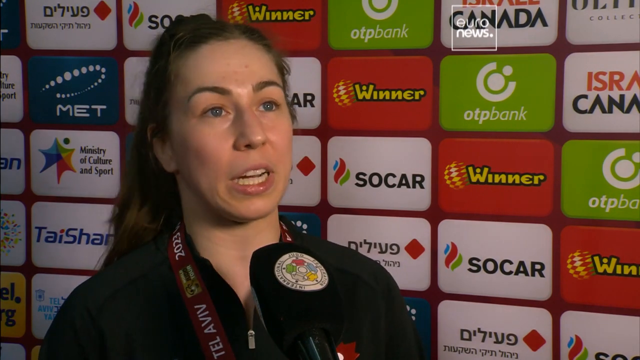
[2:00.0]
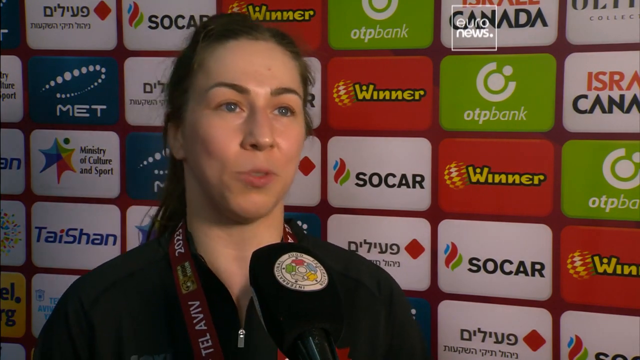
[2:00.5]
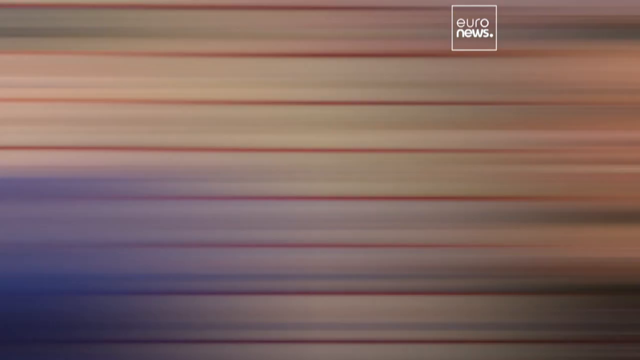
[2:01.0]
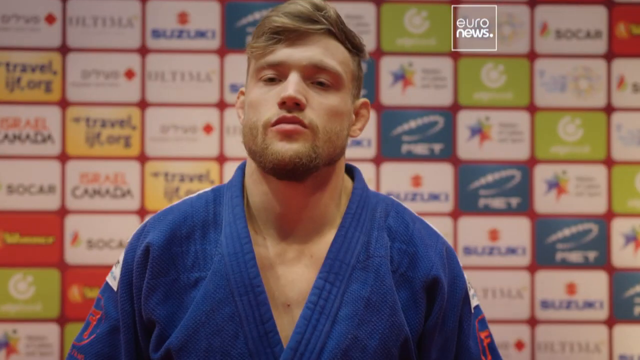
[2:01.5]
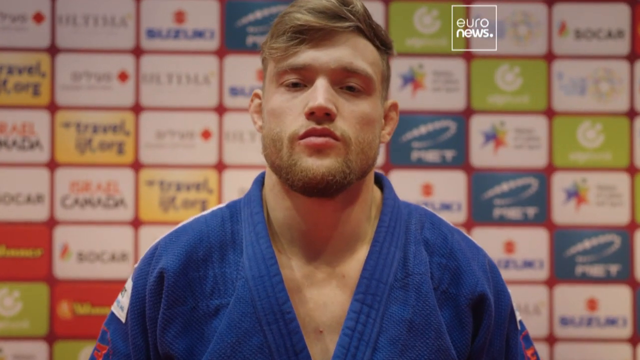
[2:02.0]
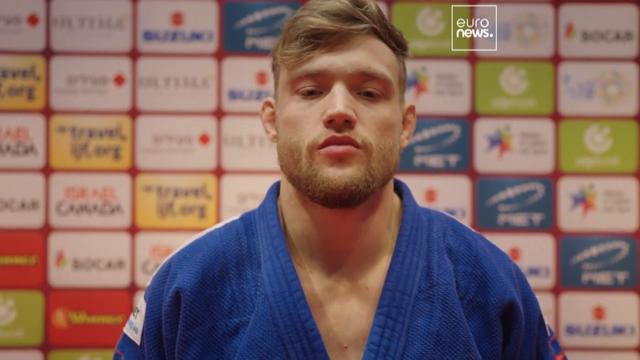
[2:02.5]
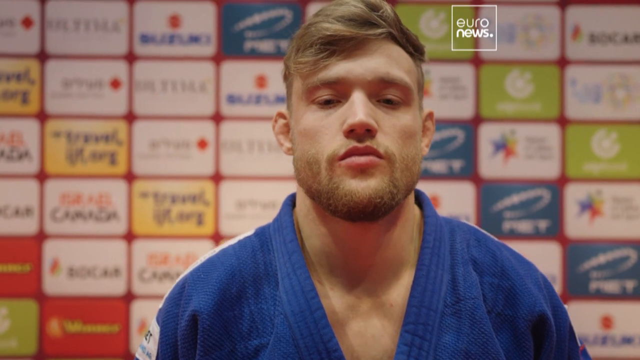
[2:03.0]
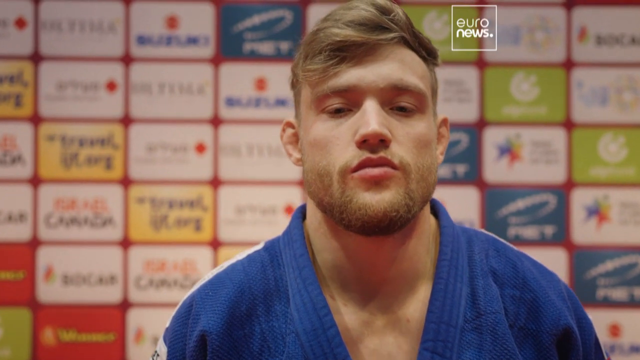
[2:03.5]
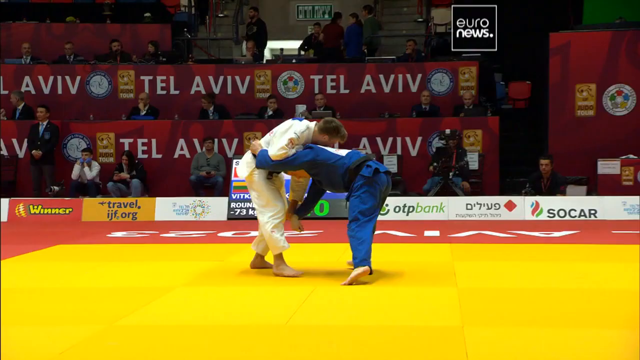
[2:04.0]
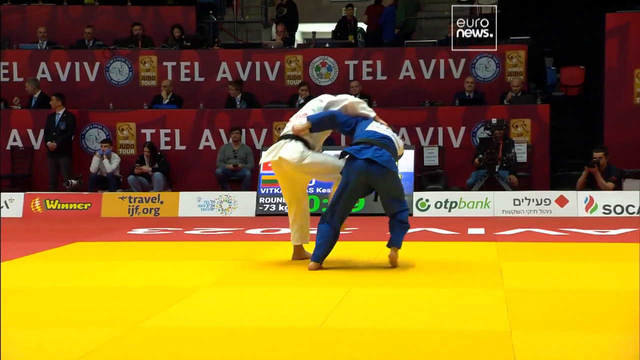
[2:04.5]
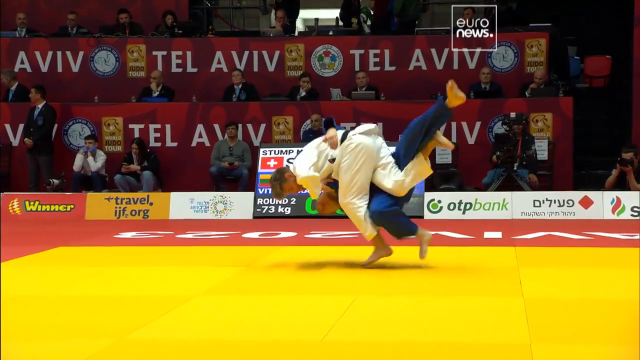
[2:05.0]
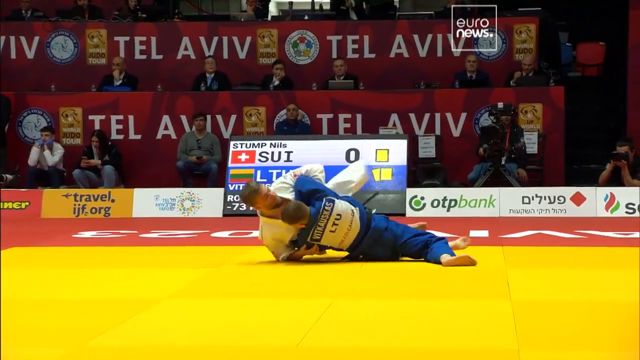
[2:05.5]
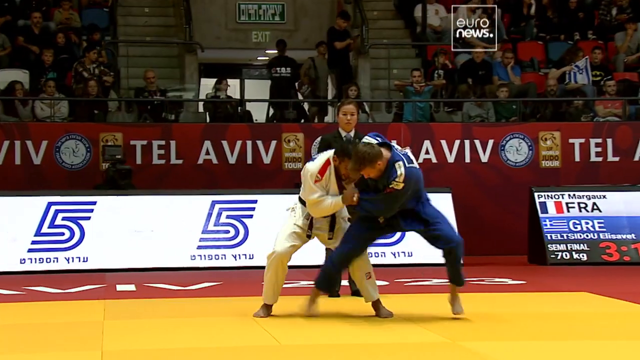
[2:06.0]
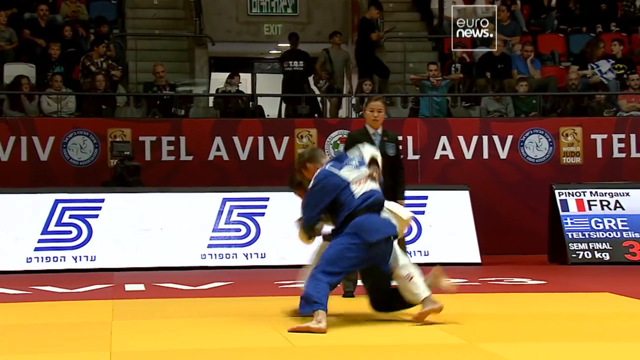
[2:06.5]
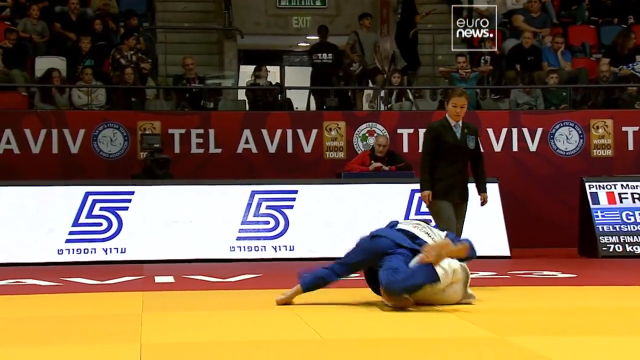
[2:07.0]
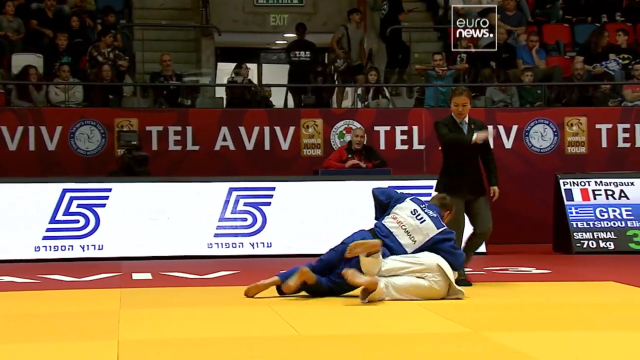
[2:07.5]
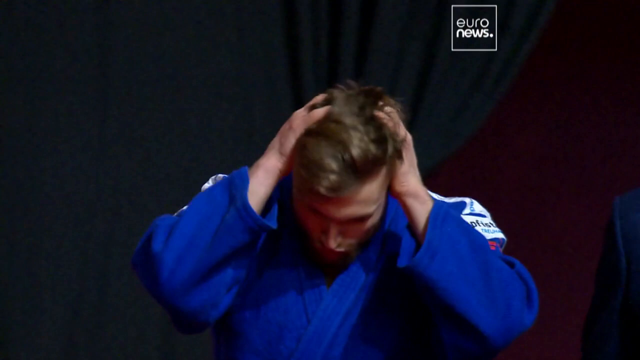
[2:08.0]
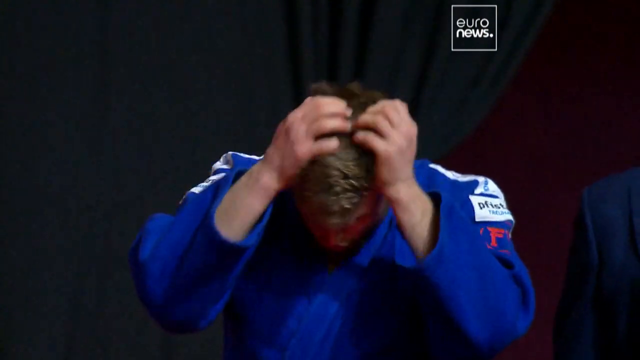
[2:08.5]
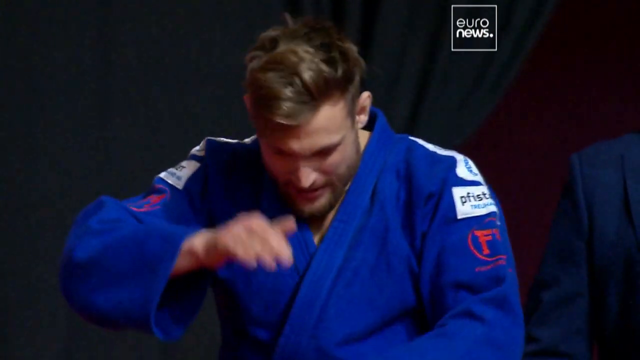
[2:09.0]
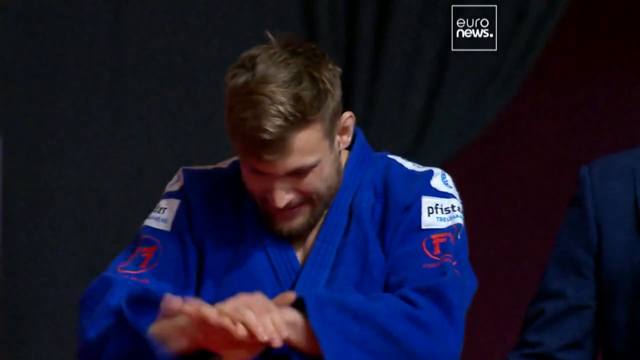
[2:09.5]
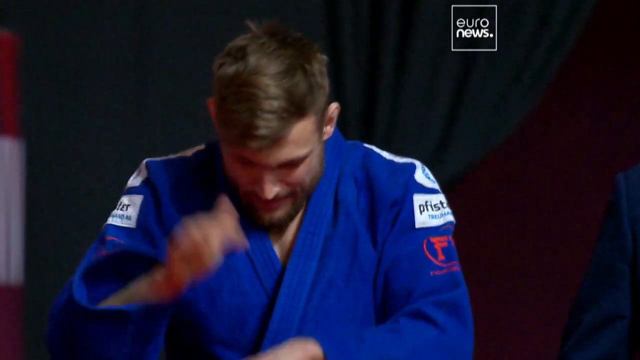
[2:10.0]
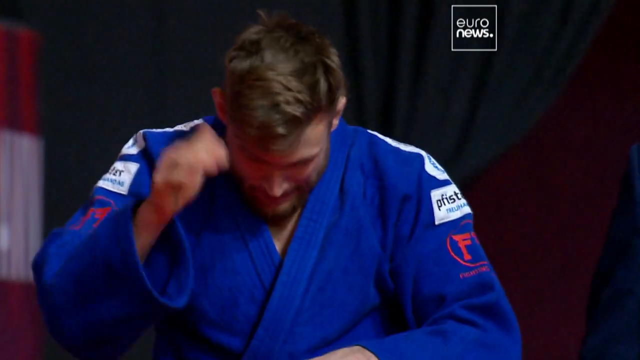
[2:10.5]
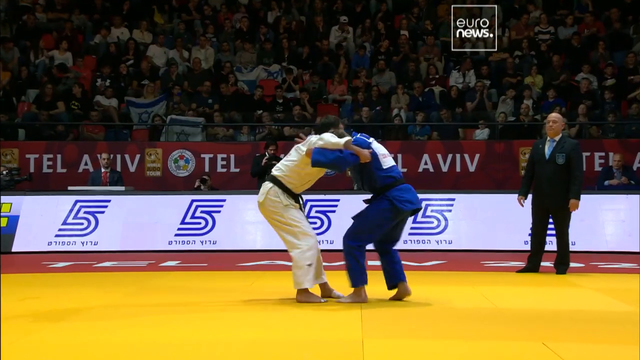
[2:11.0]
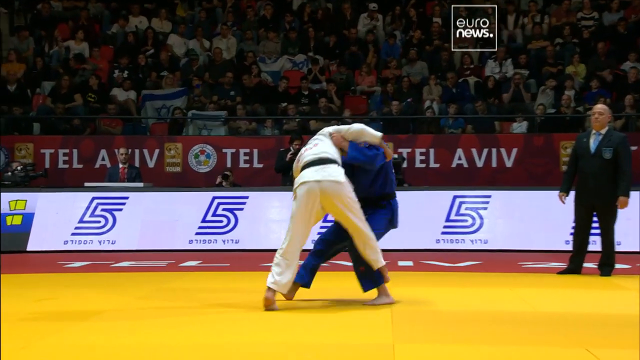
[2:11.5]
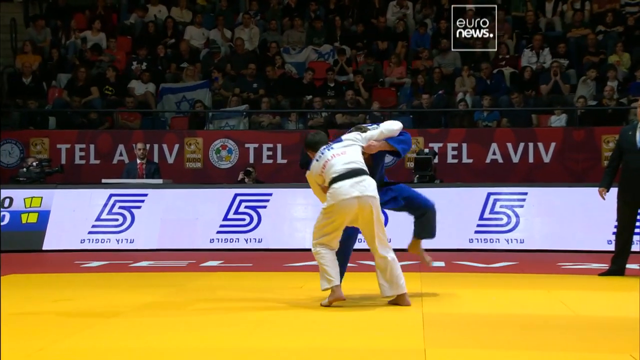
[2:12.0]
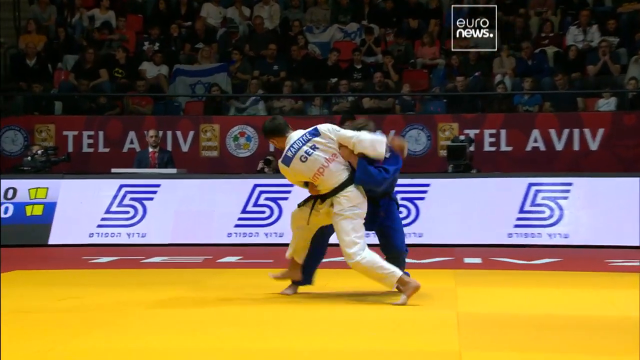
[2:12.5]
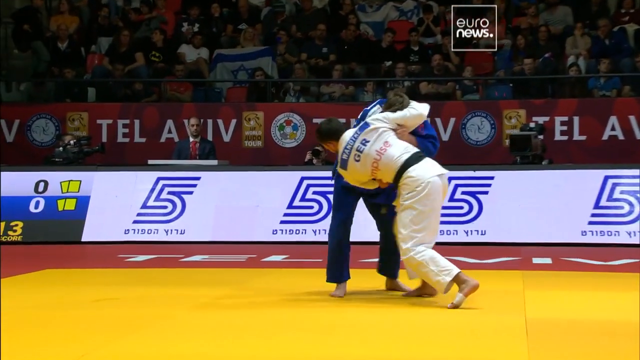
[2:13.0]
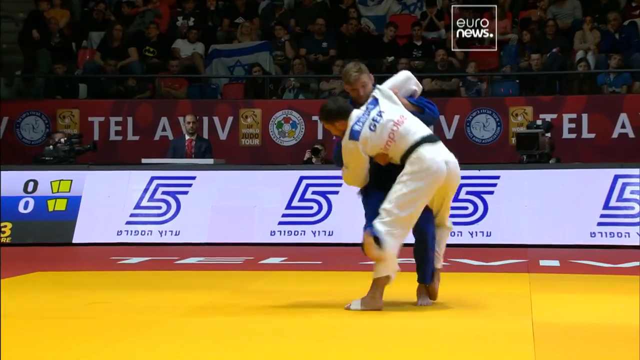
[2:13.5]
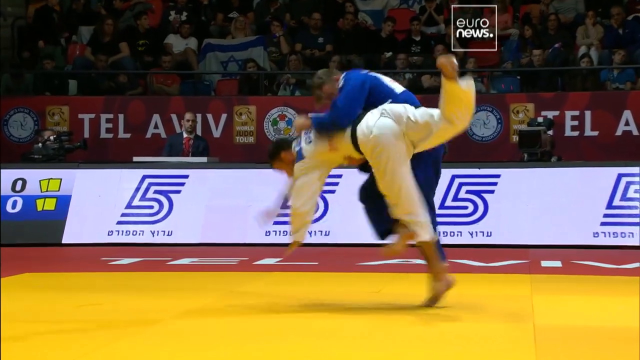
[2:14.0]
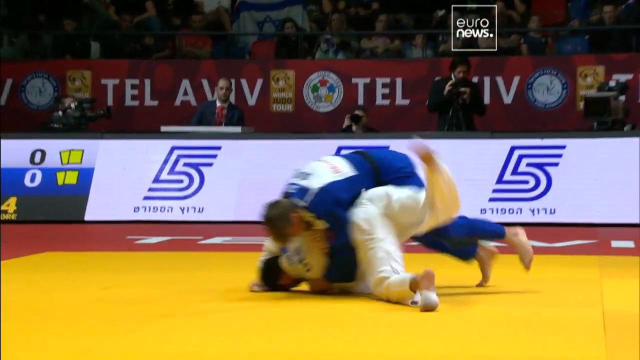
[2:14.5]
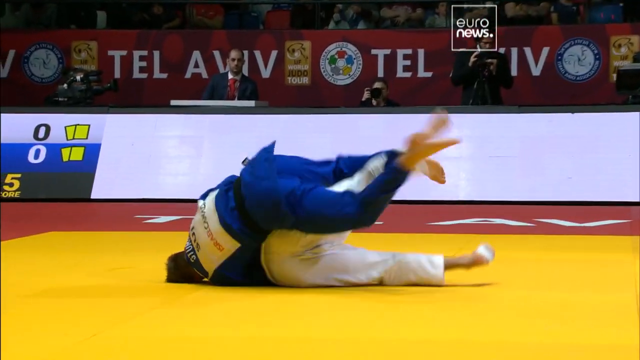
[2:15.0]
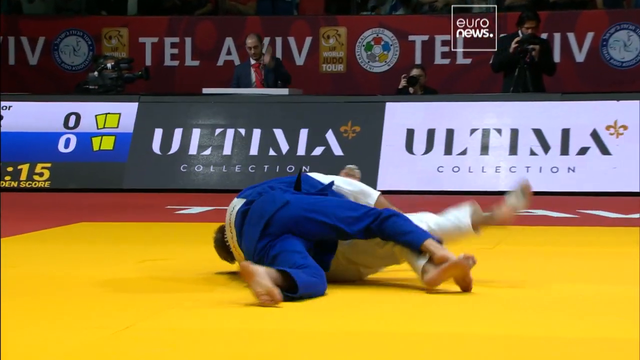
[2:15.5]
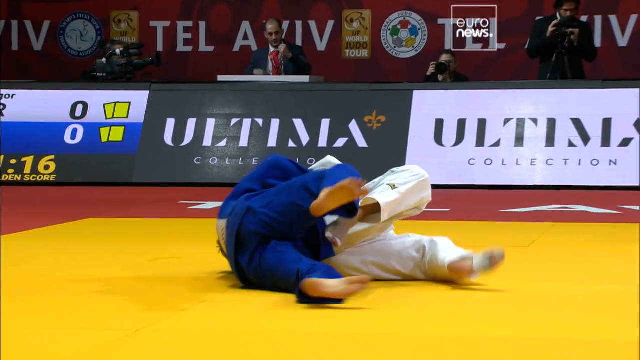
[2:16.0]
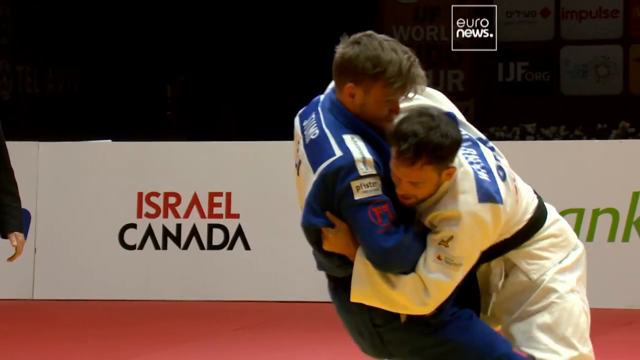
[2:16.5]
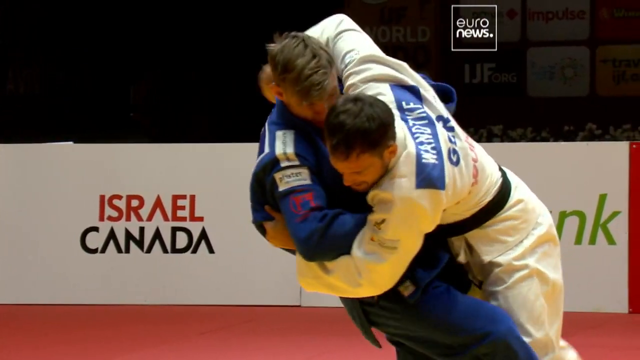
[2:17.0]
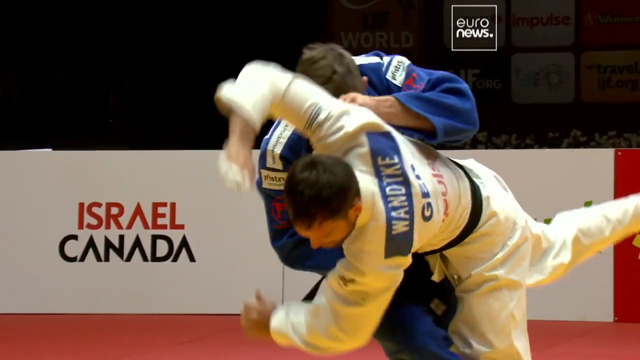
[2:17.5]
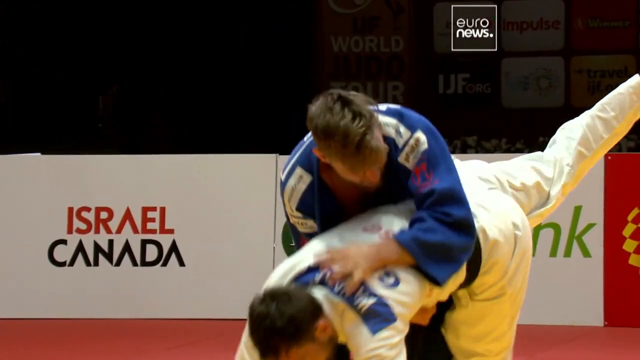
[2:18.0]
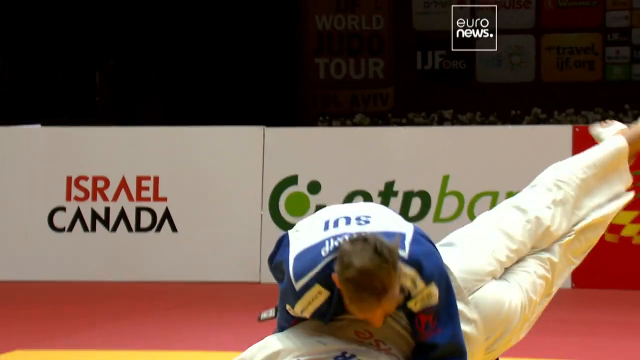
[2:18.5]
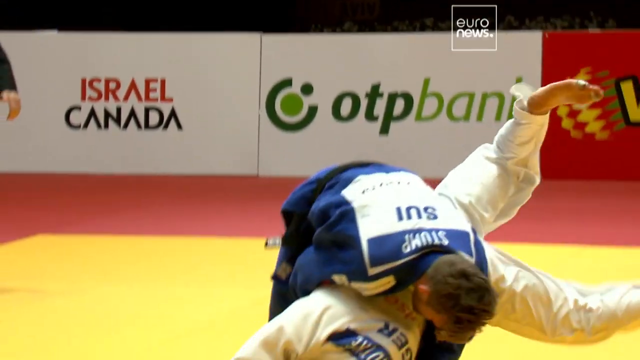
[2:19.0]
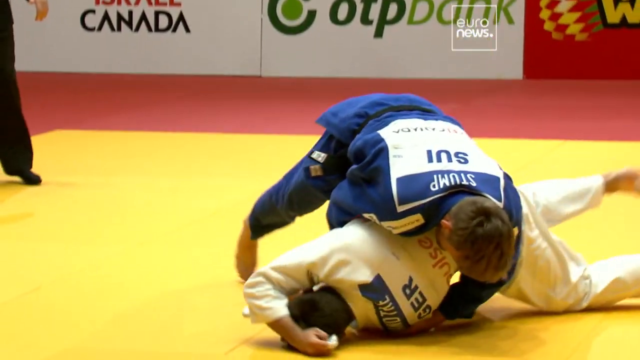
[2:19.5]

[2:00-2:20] A new athlete in a blue uniform is shown zoomed in close, in what looks like a promotional shot of a fighter before a fight. He is white, with cauliflower ears, sandy blonde hair, a strong chin and a sandy or strawberry blonde beard. Back in the Tel Aviv arena, on the yellow mat, a judo person in white appears to flip him, then he gets on top of him, and a referee puts his hand out as if it is over. He is then shown grappling with a person in white who has "GER" on the back of the uniform, probably an athlete from Germany; the athlete in blue has "SUI" on his back, apparently from Switzerland. The clips focus on him in judo matches on the floor, including slow-motion shots of the action.